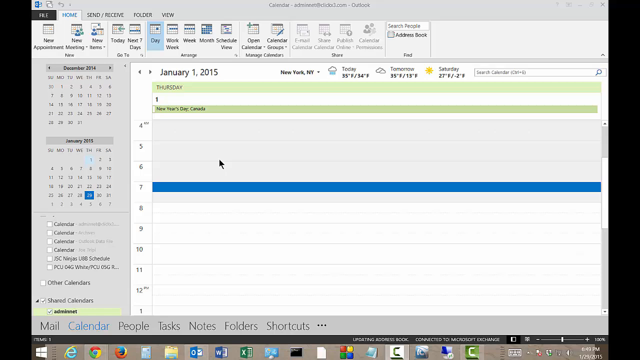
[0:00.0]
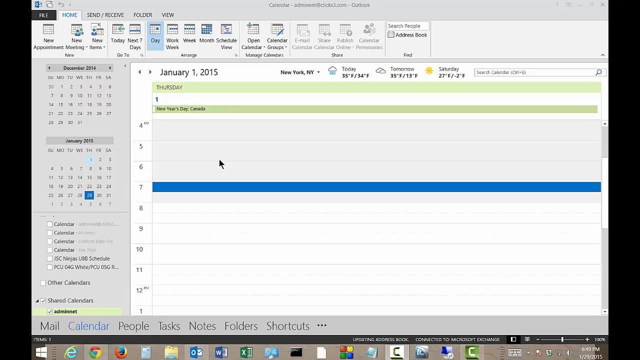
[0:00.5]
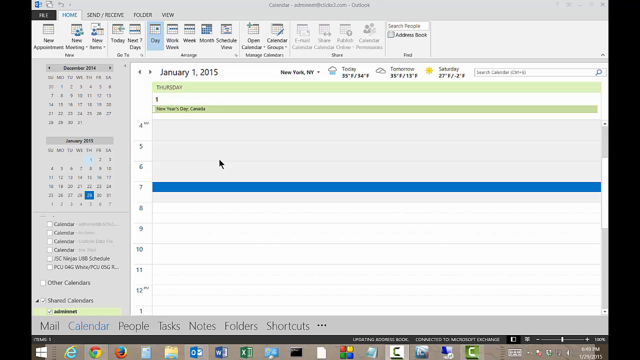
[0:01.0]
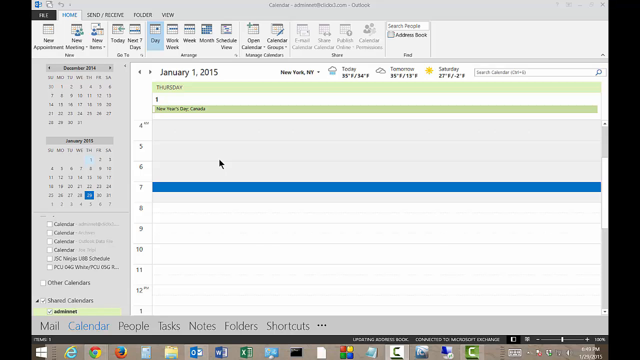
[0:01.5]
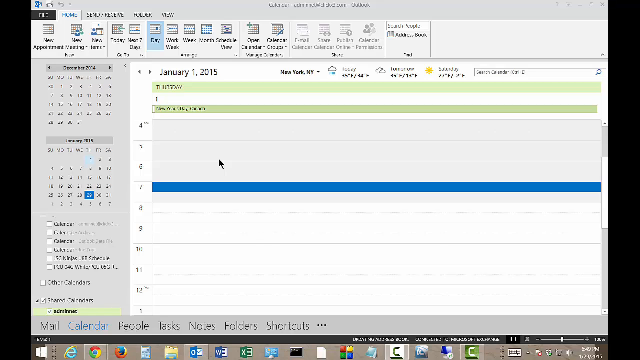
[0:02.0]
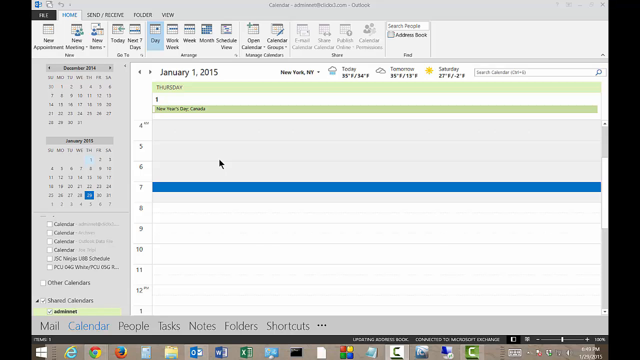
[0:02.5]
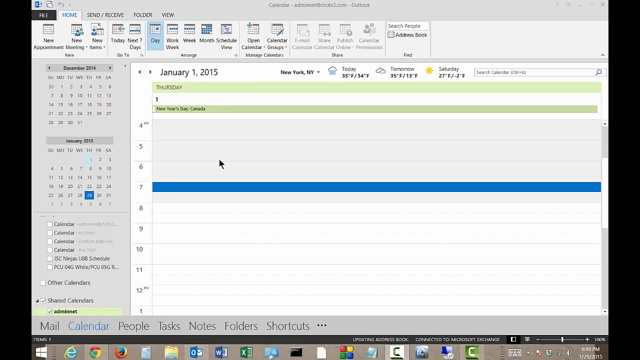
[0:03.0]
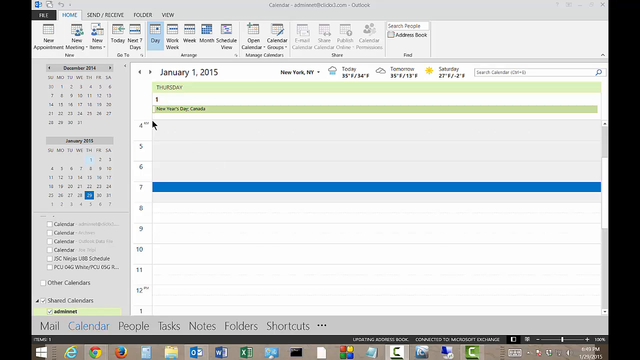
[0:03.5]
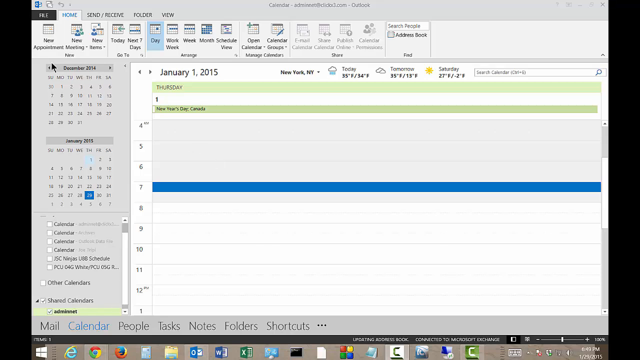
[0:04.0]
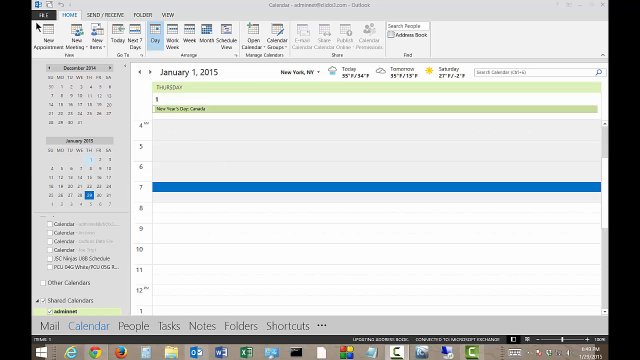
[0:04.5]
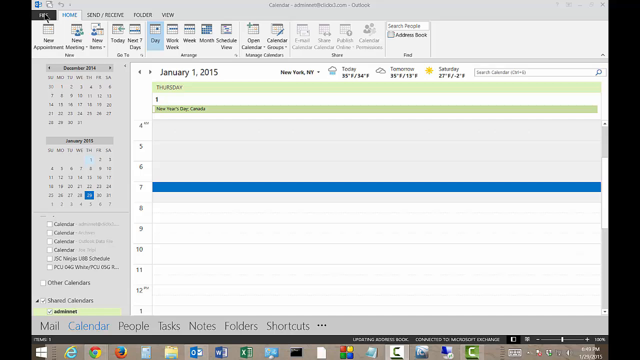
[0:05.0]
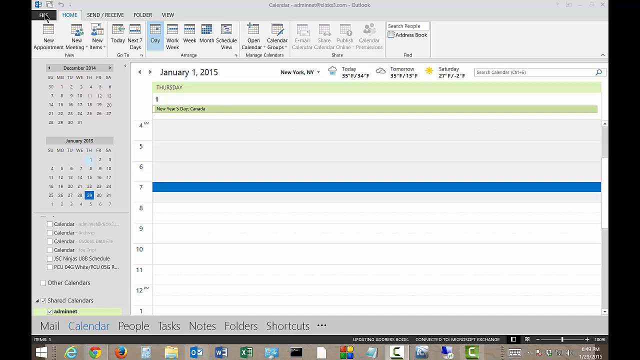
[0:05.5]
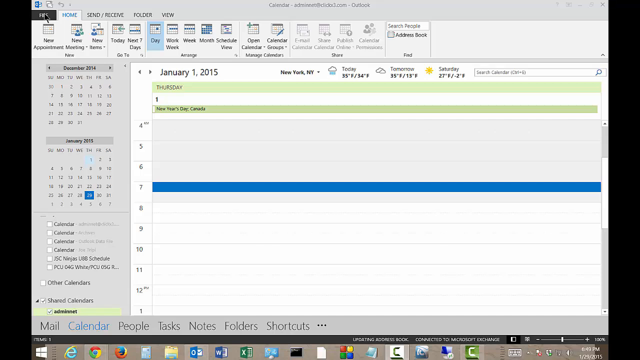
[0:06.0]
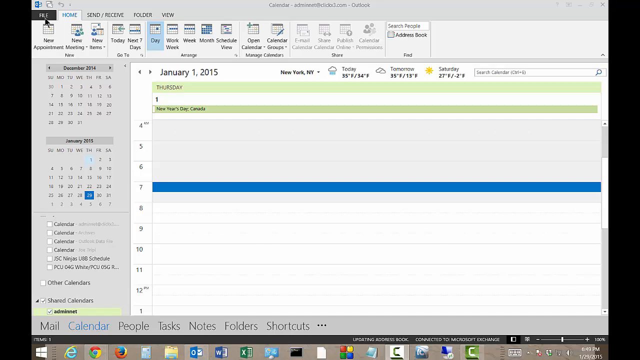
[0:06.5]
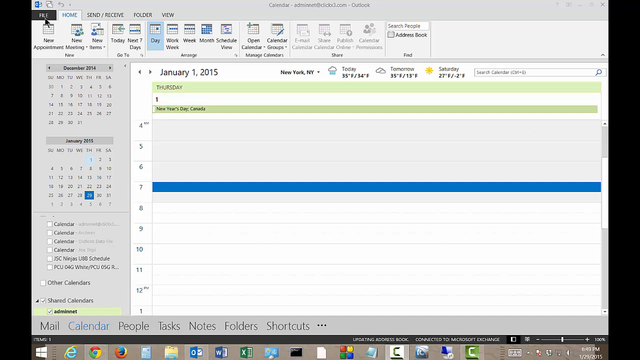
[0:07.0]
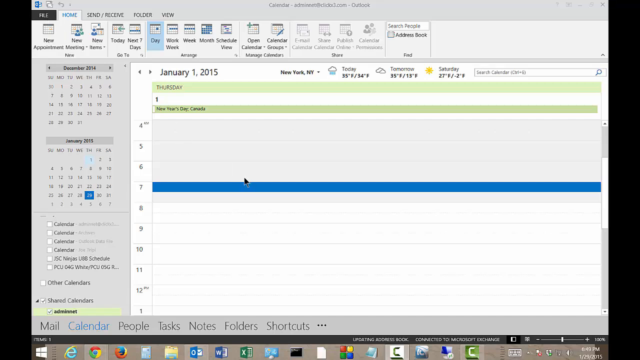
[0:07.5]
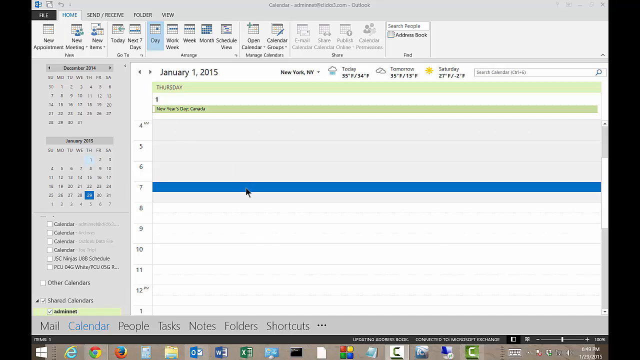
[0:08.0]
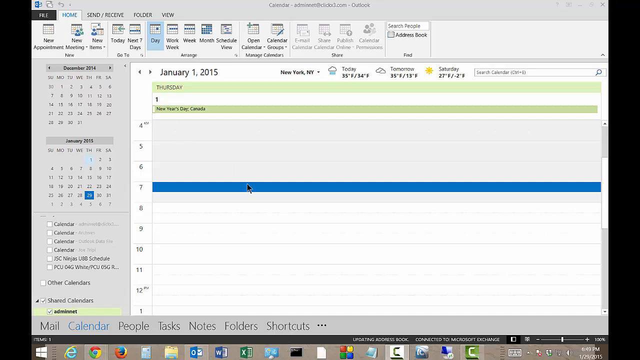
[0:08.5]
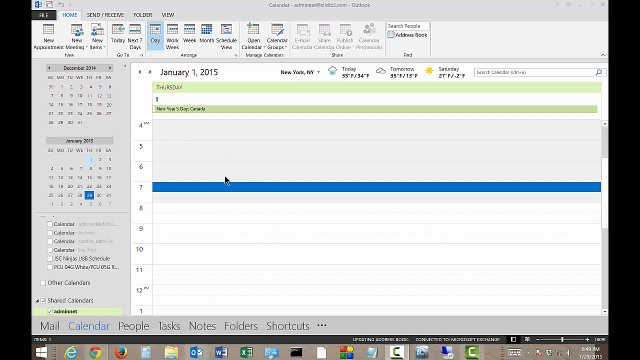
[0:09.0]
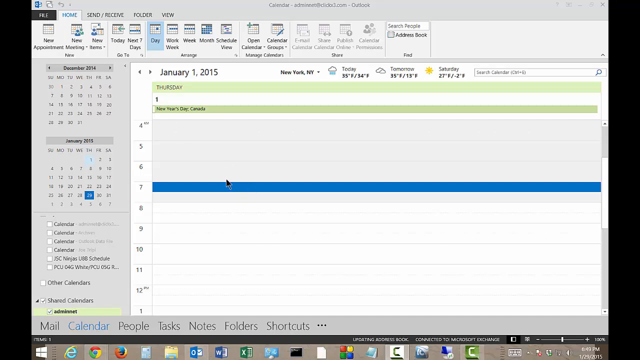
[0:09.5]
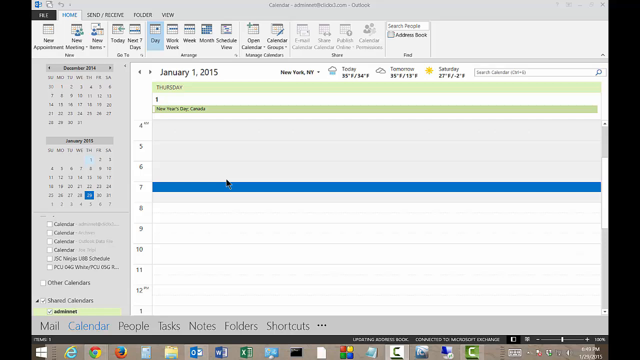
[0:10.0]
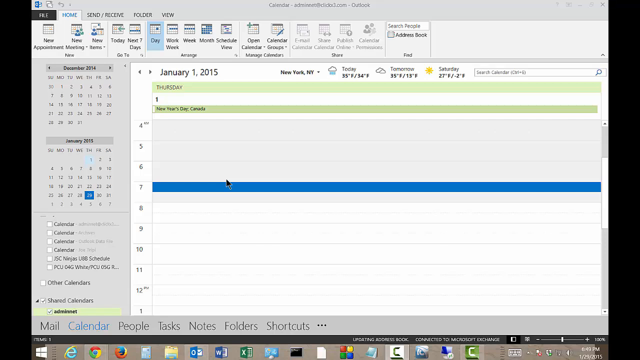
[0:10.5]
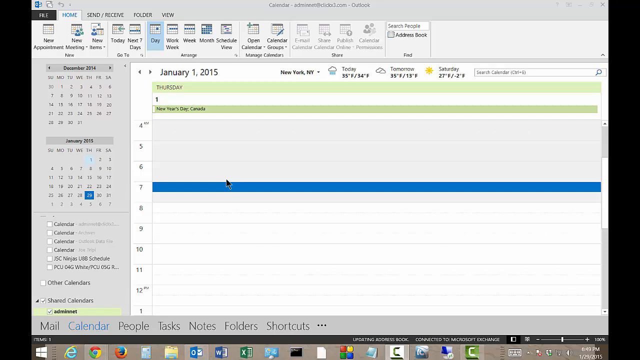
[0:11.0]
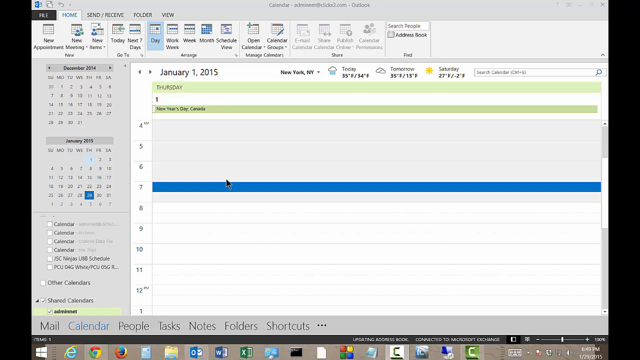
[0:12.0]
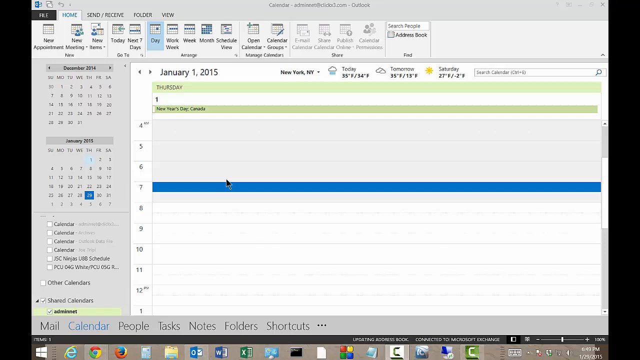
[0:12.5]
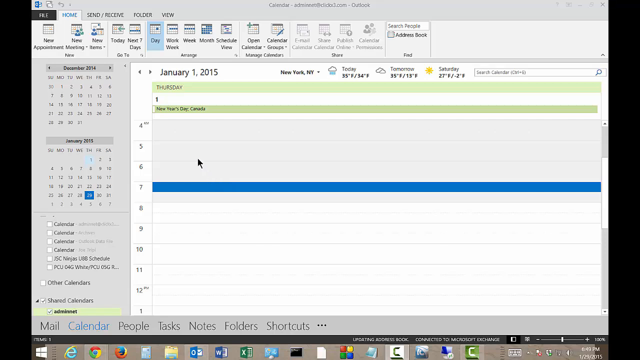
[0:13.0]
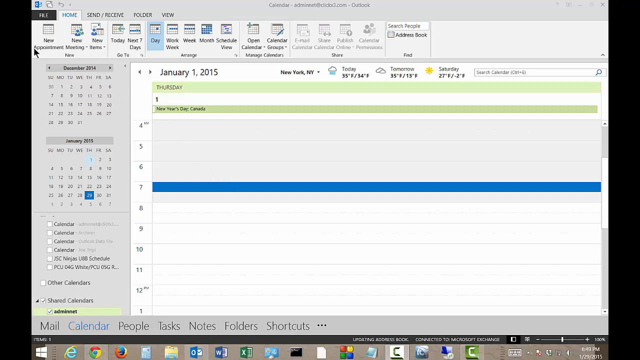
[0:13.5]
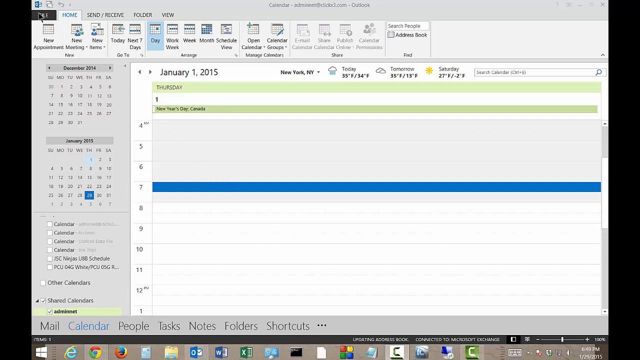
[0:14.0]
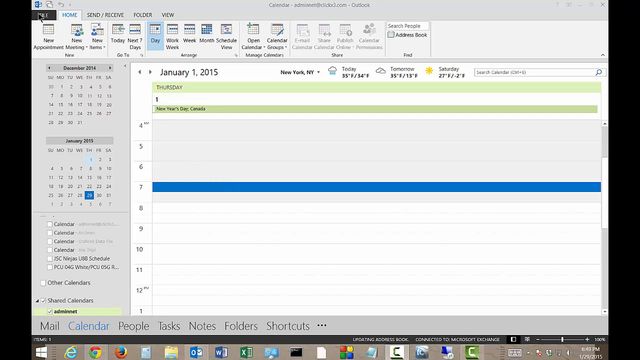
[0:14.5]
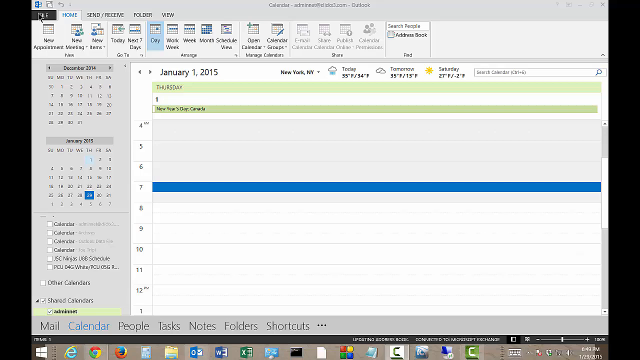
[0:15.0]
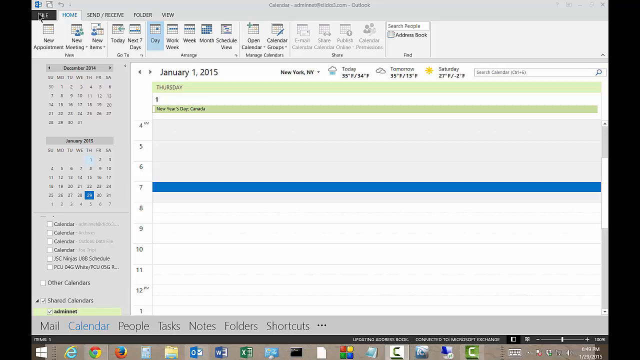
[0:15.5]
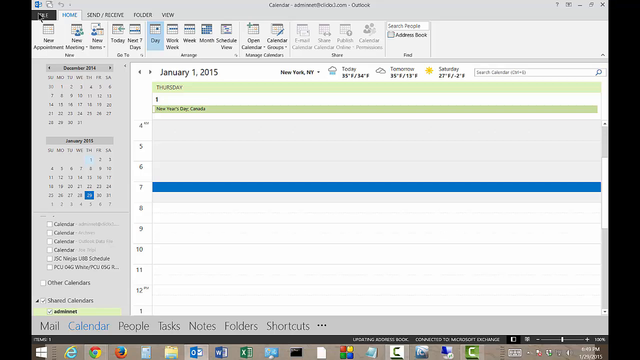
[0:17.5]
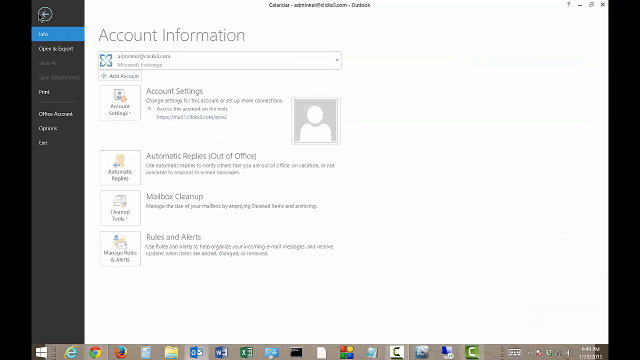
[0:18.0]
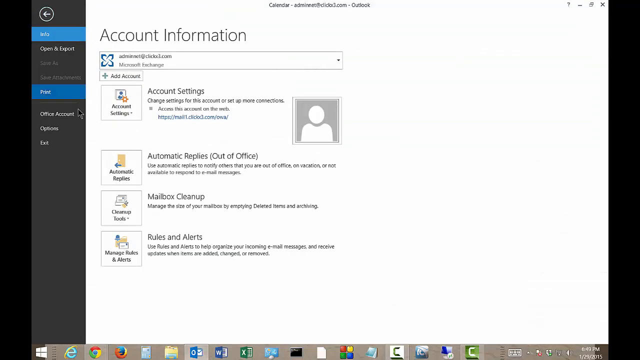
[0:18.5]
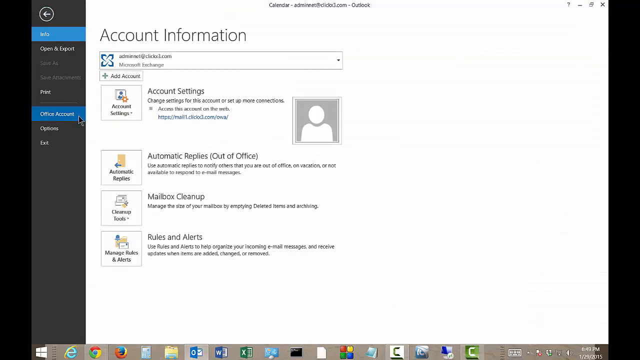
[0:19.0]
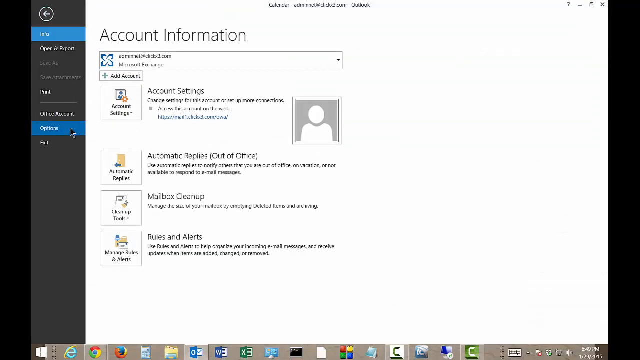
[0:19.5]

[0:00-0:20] What appears to be the Outlook calendar is on screen, navigated to the date January 3rd, 2015. The mouse cursor is somewhere in the middle left of the screen. A weather forecast for New York is placed beside the date and shows the forecast for Saturday. The cursor goes up to the "file" box, back down to the next tab, then back to "file", and selects "options". Selecting "file" brings up account information with more options, including account settings, automatic replies and out of office setting, mailbox cleanup, and rules and alerts. All the writing on the screen is legible as the user navigates the application.